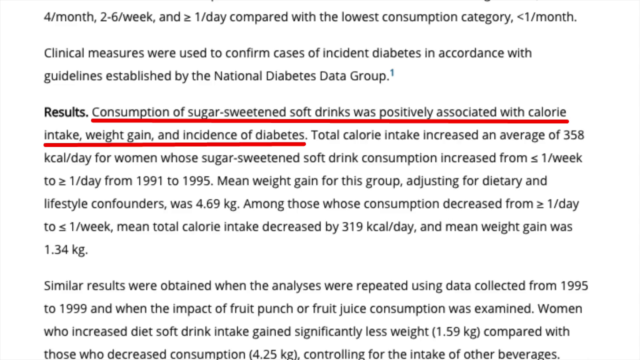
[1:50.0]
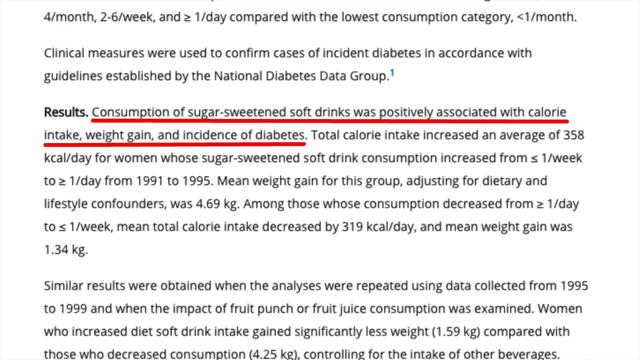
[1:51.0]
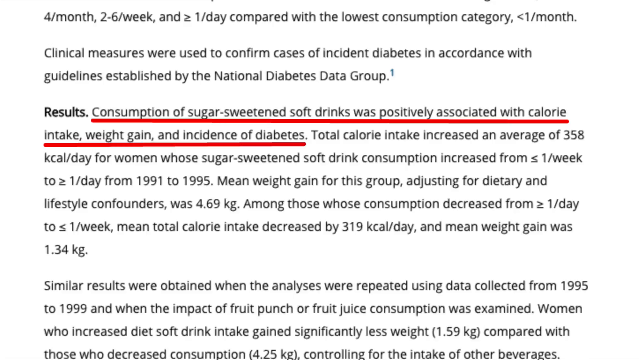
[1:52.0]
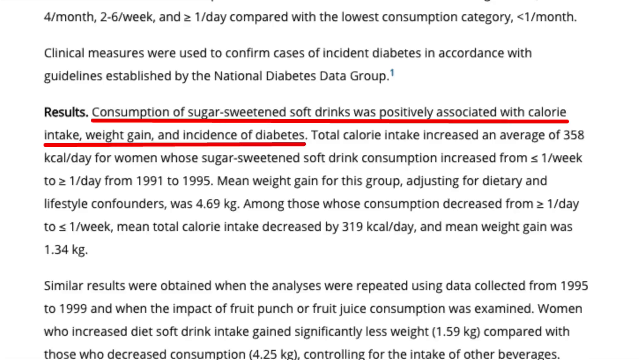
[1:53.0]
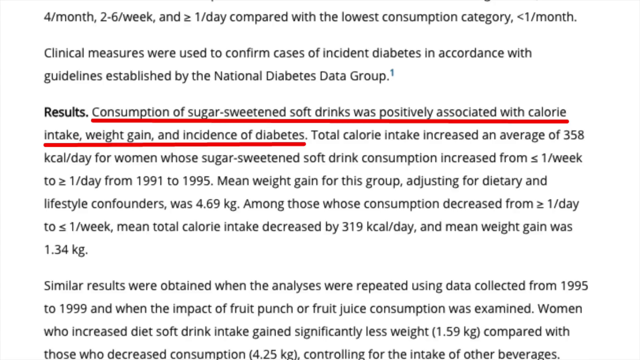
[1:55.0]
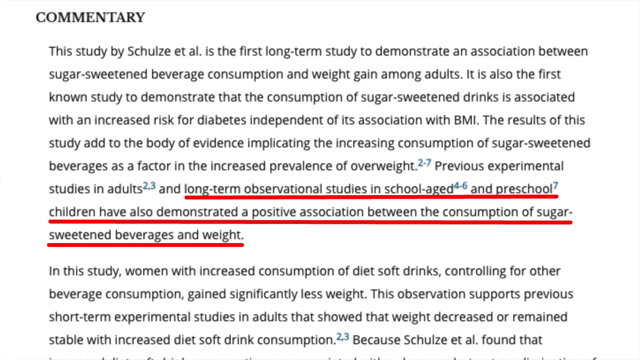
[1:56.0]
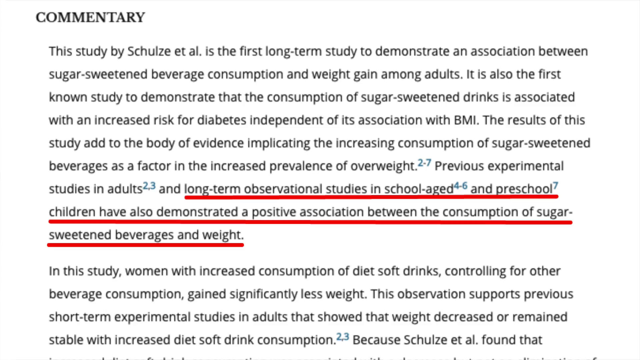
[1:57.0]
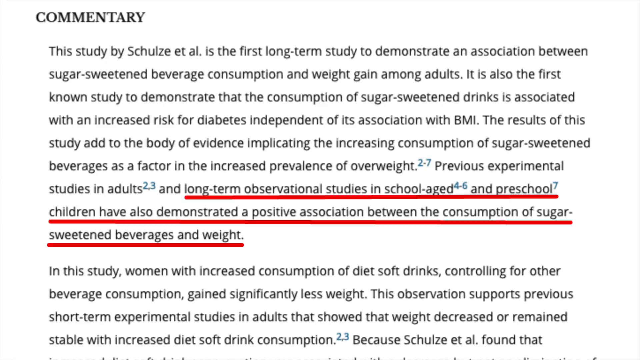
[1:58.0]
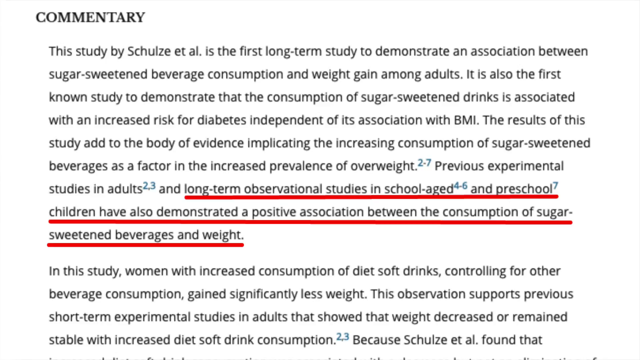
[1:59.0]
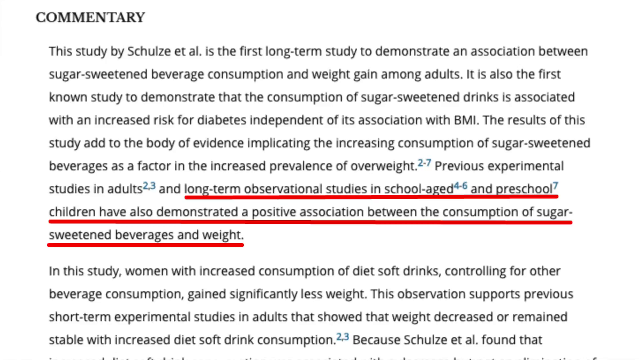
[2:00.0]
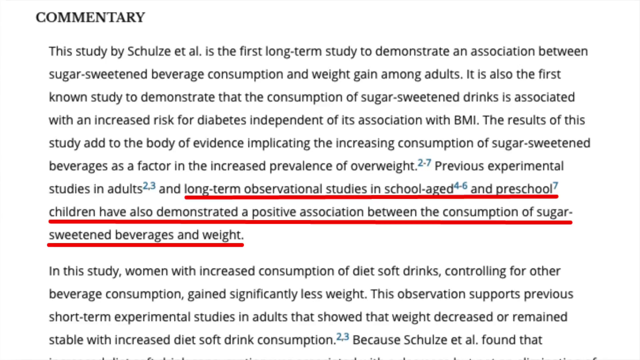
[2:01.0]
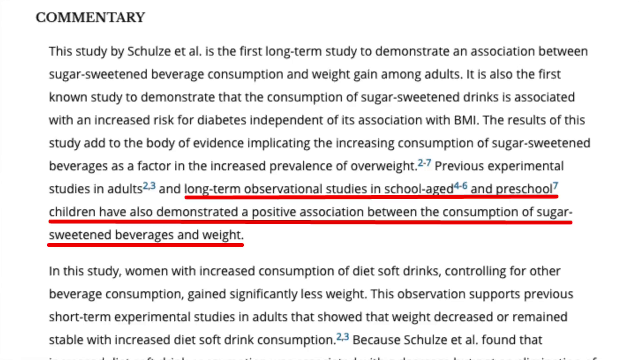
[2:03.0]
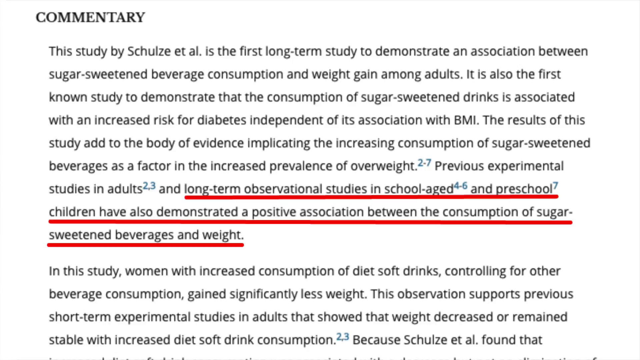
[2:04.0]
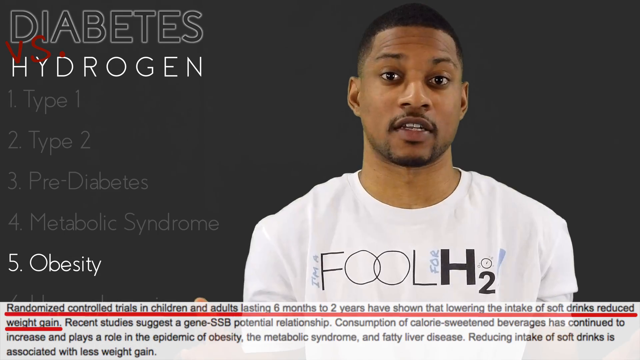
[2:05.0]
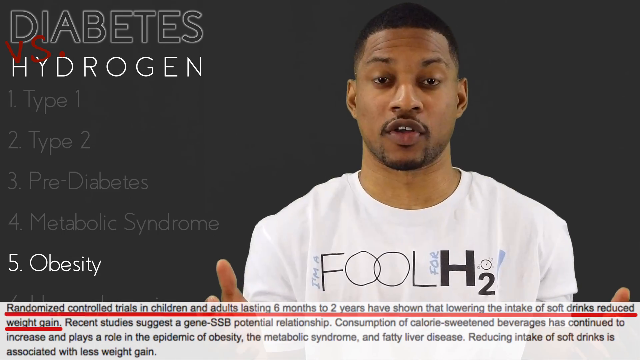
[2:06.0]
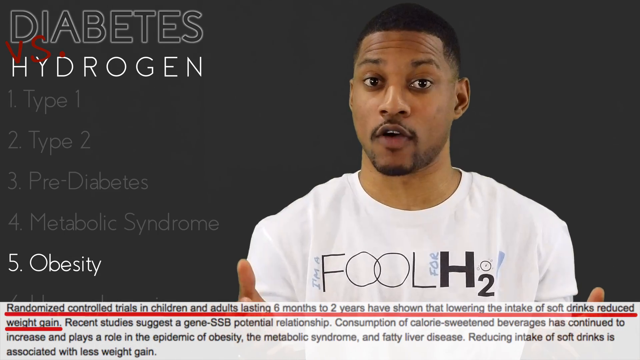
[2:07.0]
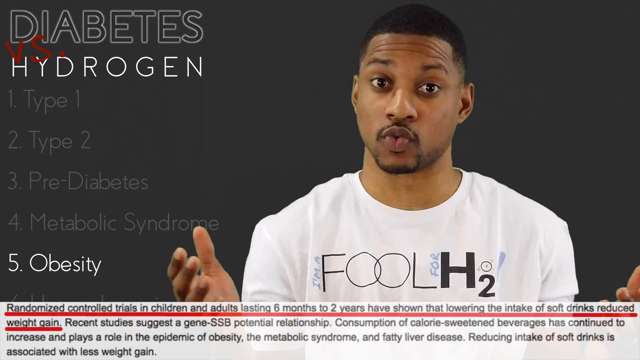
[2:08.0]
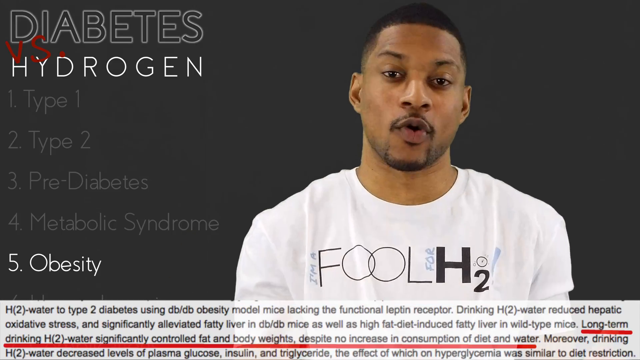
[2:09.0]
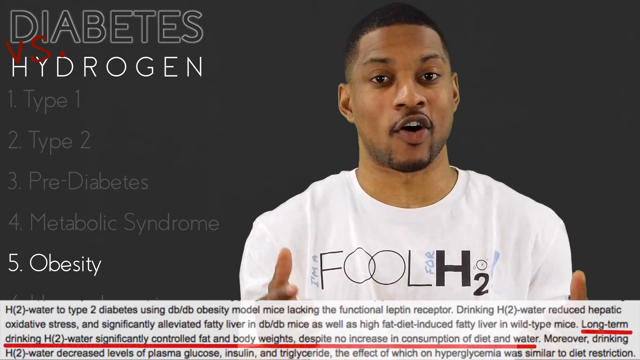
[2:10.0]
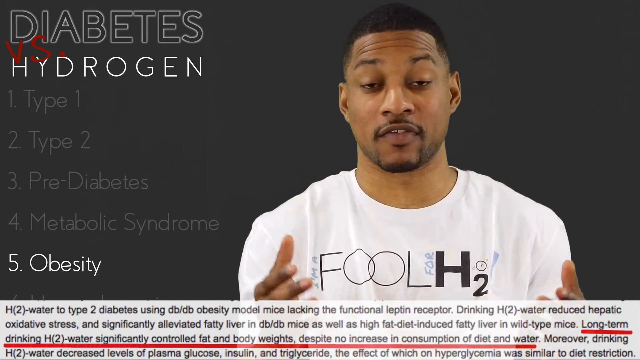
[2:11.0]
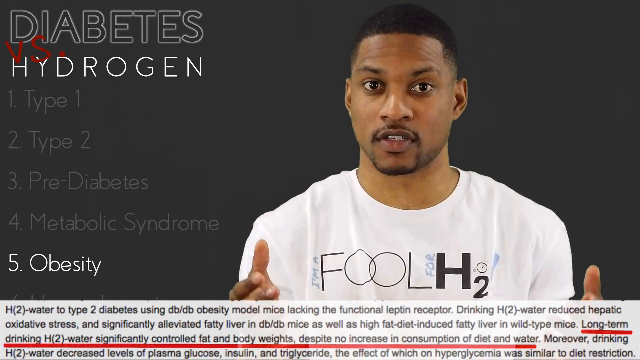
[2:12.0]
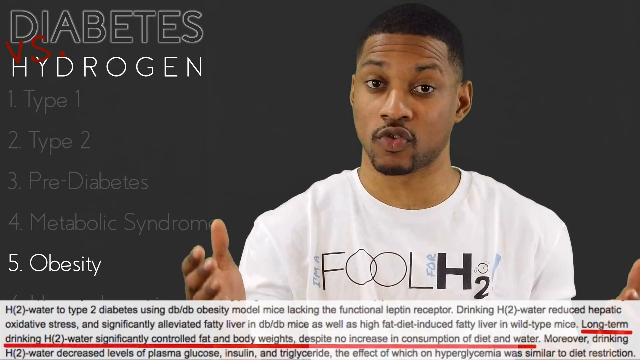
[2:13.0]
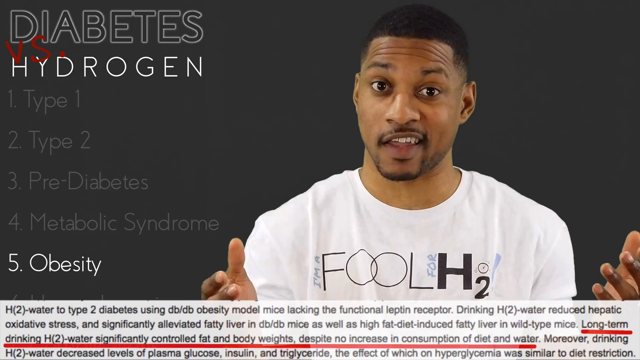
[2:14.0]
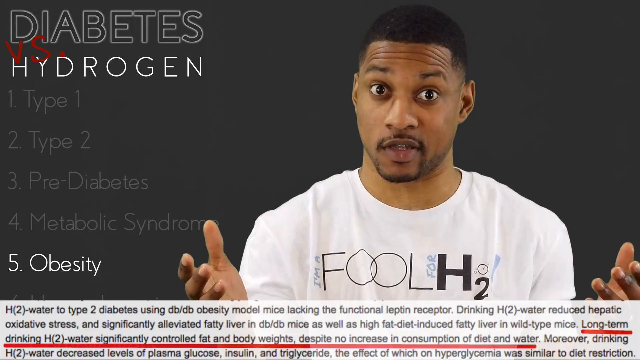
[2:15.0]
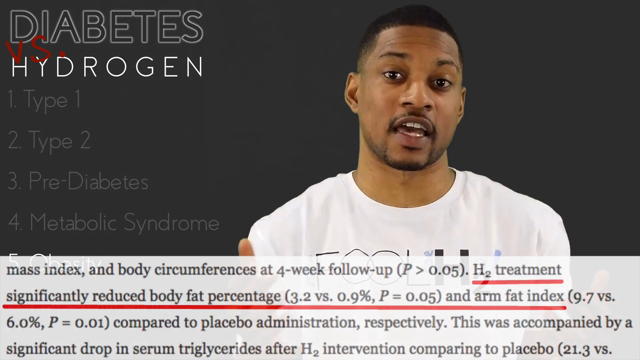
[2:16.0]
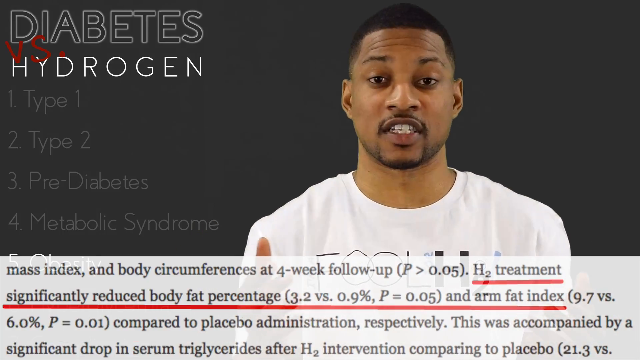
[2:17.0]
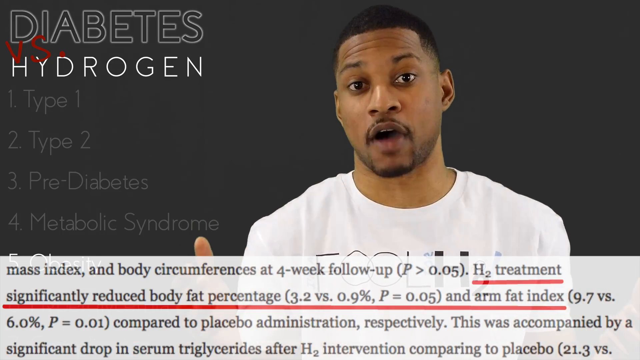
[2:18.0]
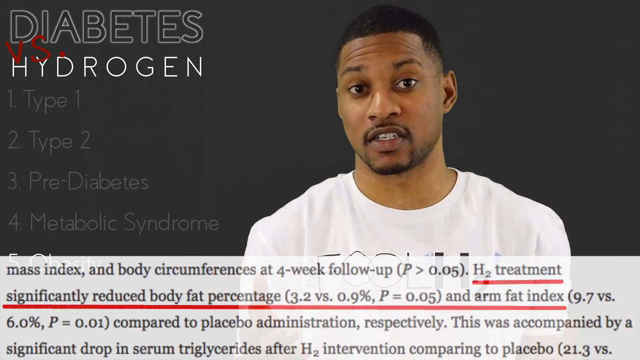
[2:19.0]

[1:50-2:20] The video presents study results on sugar-sweetened soft drinks. Clinical measures were used to confirm cases of incident diabetes in accordance with guidelines established by the National Diabetes Data Group. Consumption of sugar-sweetened soft drinks was positively associated with calorie intake, weight gain and incidence of diabetes. Total calorie intake increased by an average of 358 kcal a day for those whose consumption increased from less than 1 a week to more than 1 a day from 1991 to 1995, with a mean weight gain of 4.69 kg. Among those whose consumption decreased, mean total calorie intake increased by 319 kcal a day and mean weight gain was 1.34 kg.